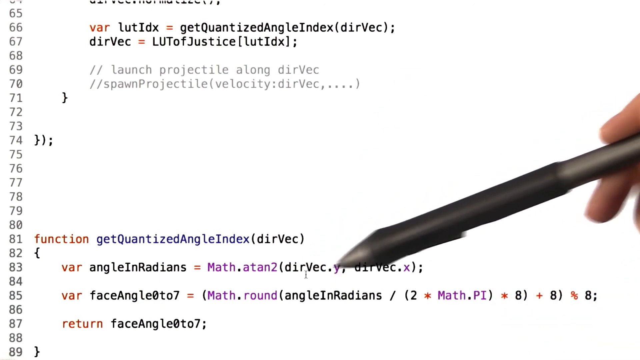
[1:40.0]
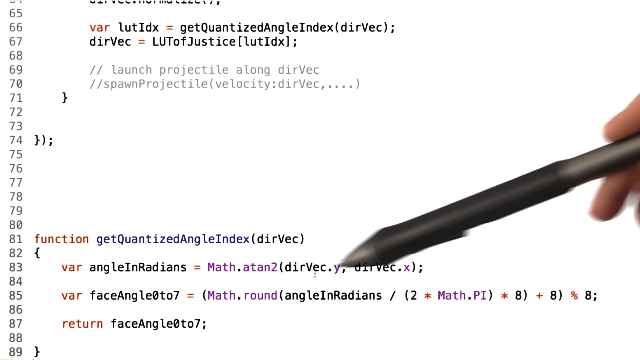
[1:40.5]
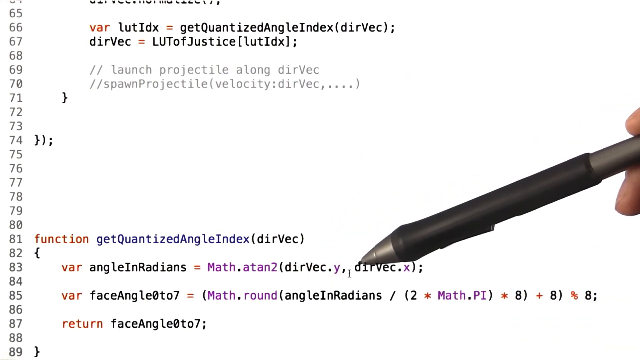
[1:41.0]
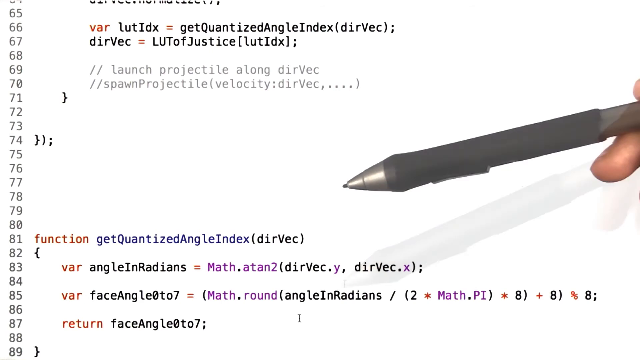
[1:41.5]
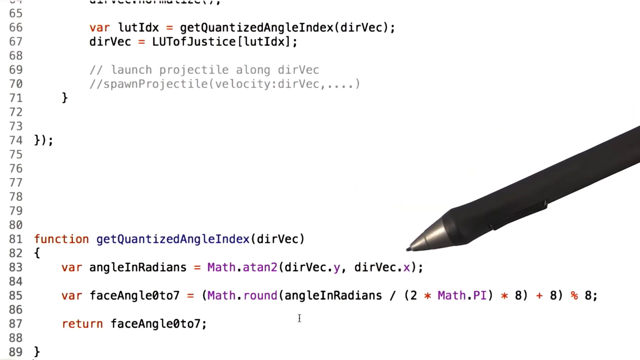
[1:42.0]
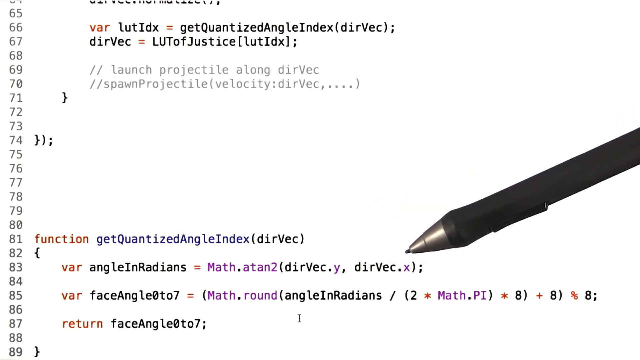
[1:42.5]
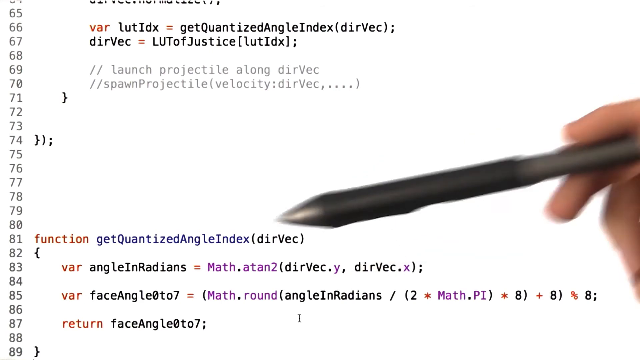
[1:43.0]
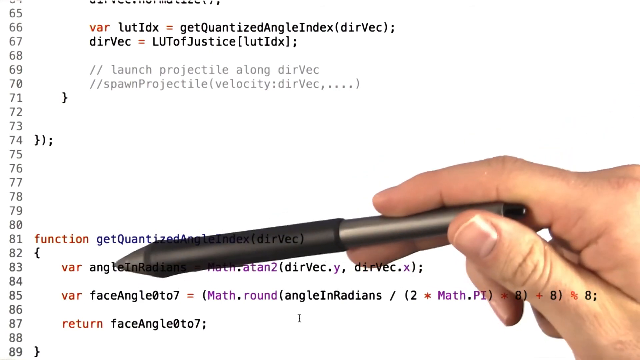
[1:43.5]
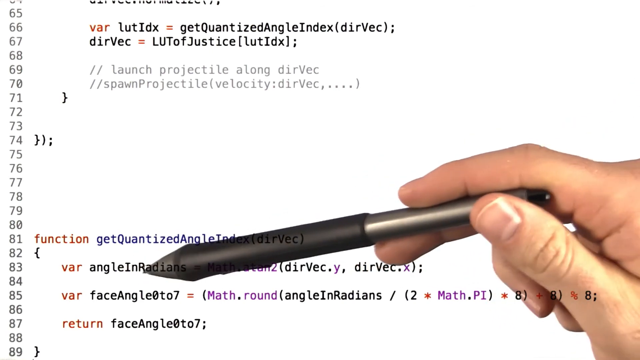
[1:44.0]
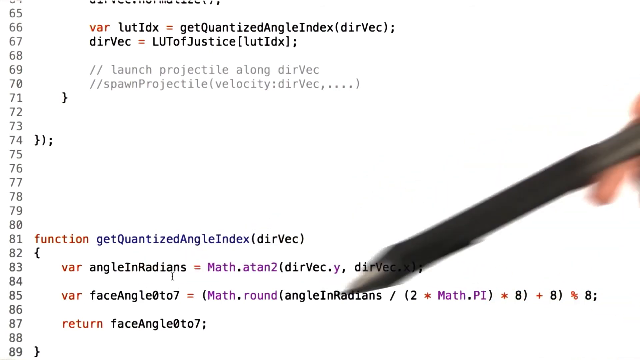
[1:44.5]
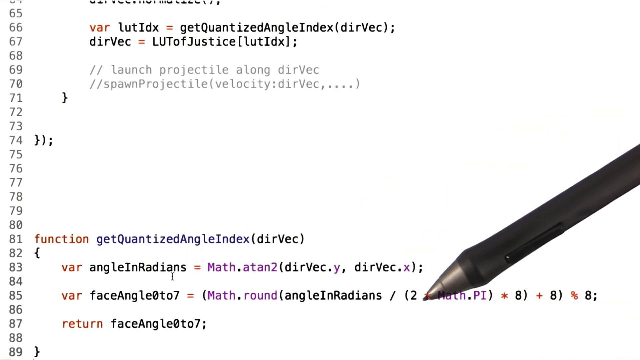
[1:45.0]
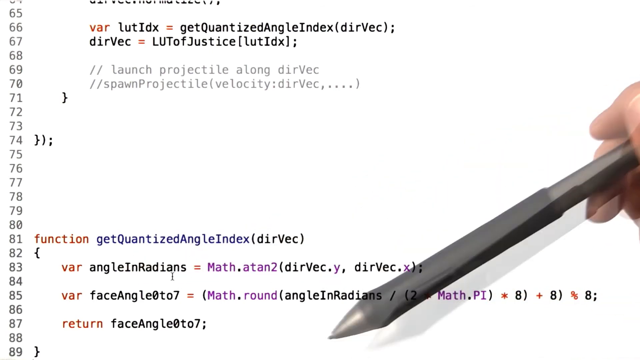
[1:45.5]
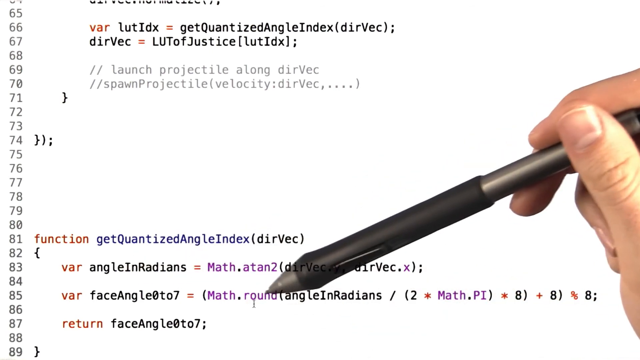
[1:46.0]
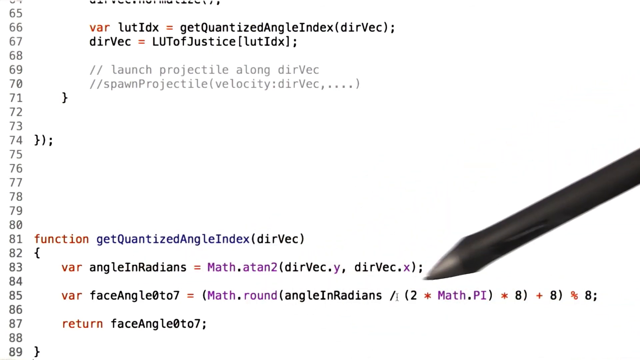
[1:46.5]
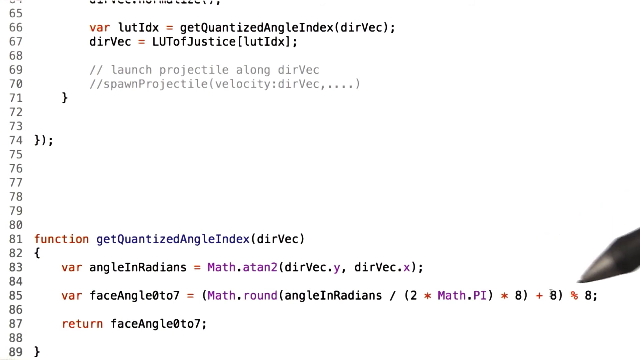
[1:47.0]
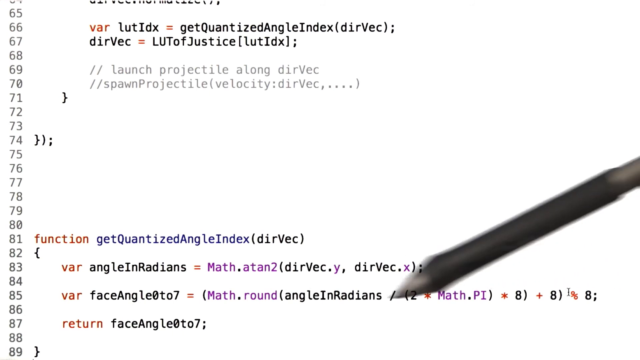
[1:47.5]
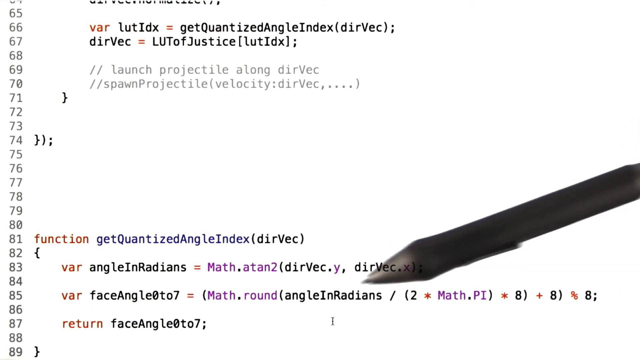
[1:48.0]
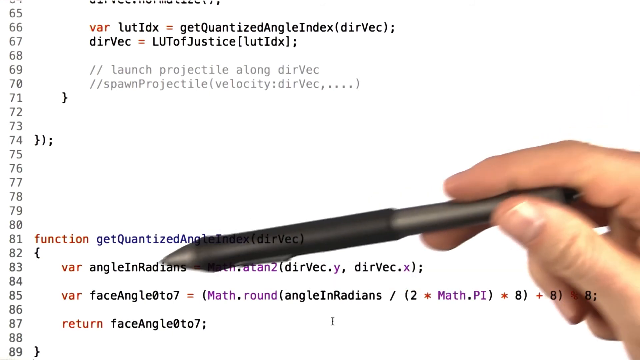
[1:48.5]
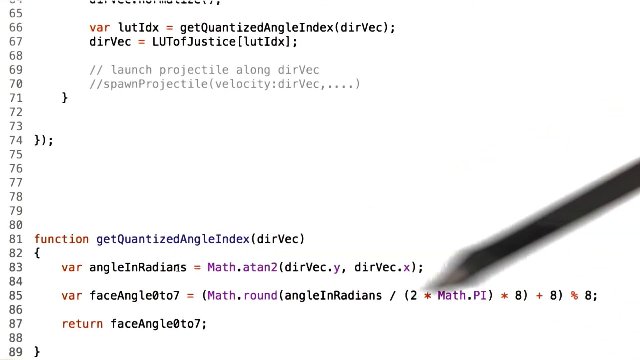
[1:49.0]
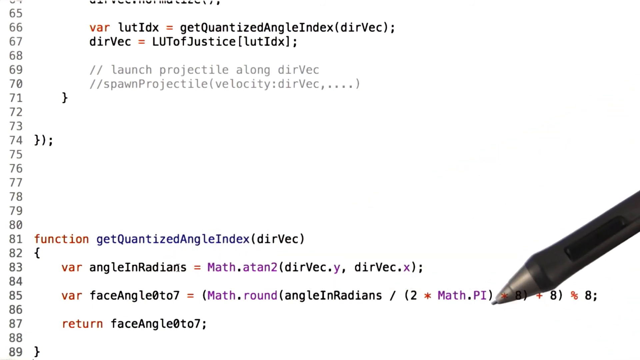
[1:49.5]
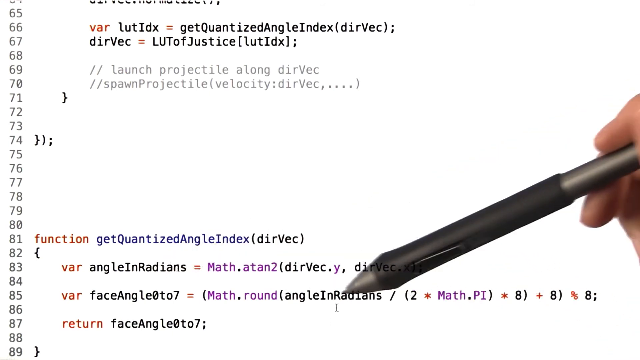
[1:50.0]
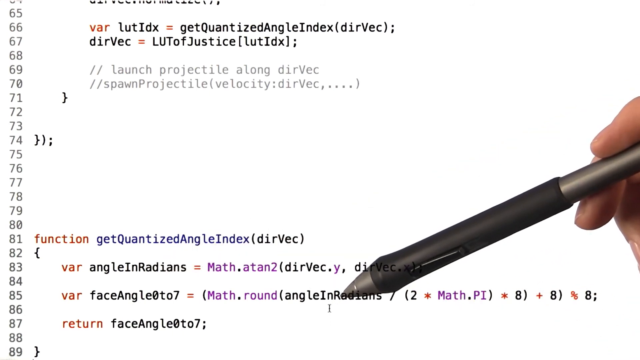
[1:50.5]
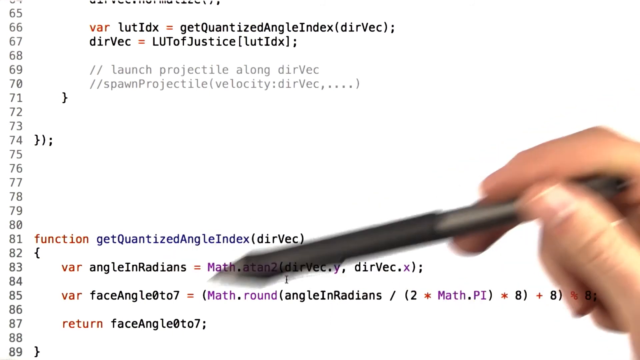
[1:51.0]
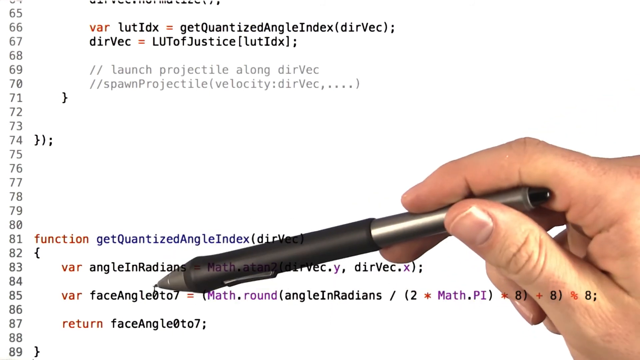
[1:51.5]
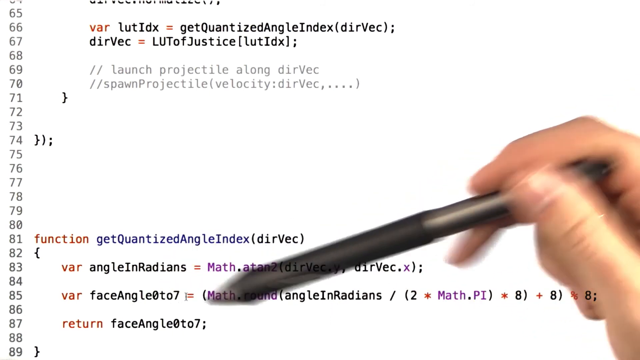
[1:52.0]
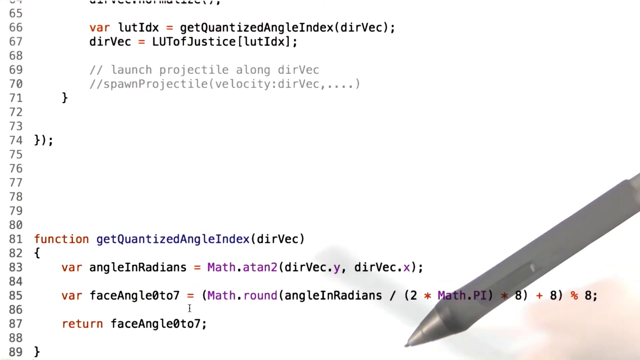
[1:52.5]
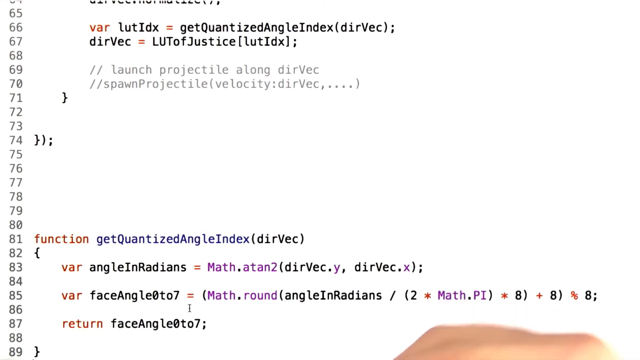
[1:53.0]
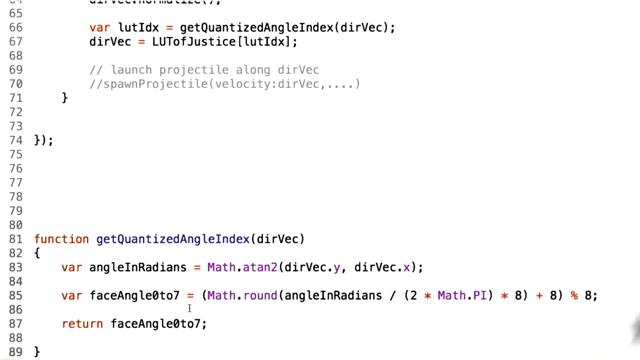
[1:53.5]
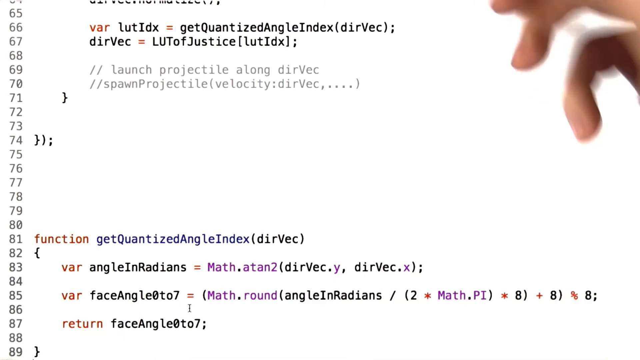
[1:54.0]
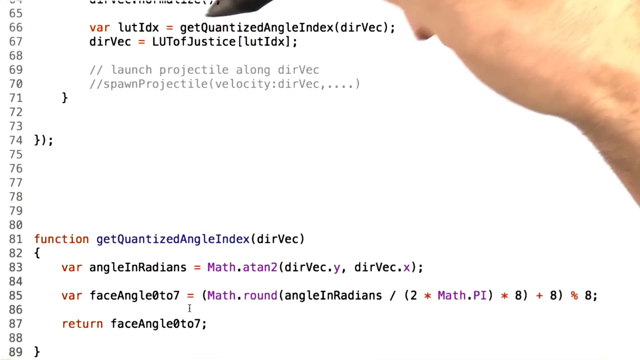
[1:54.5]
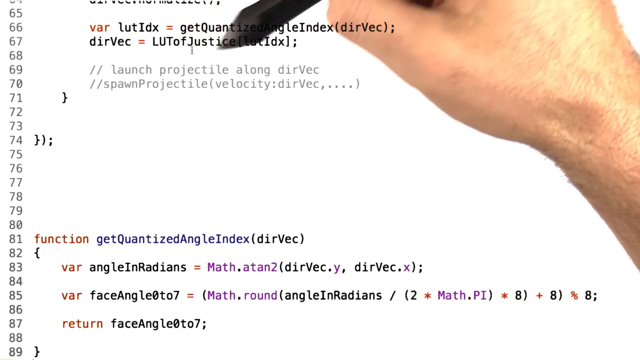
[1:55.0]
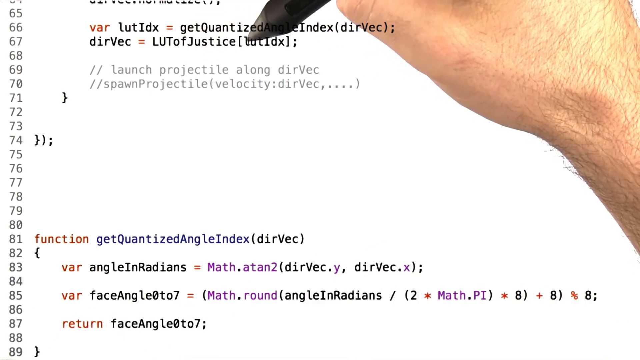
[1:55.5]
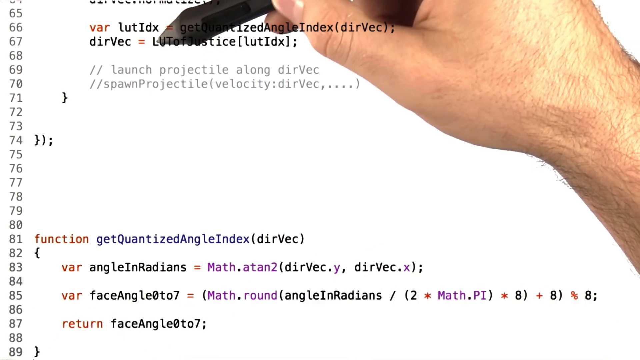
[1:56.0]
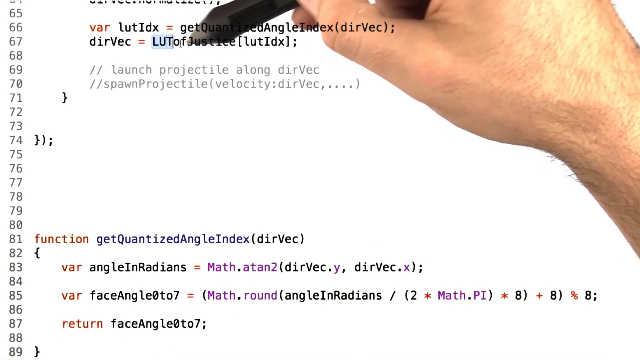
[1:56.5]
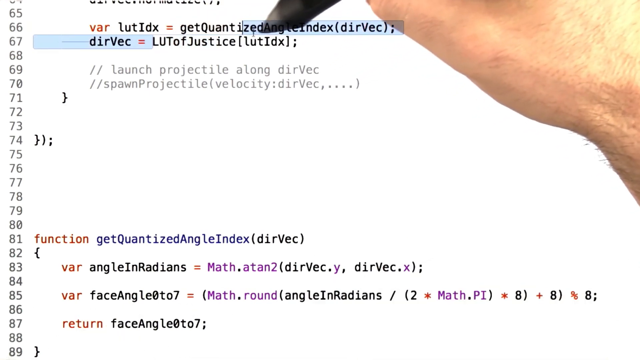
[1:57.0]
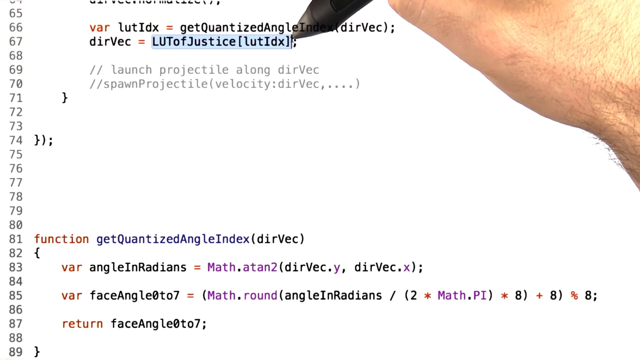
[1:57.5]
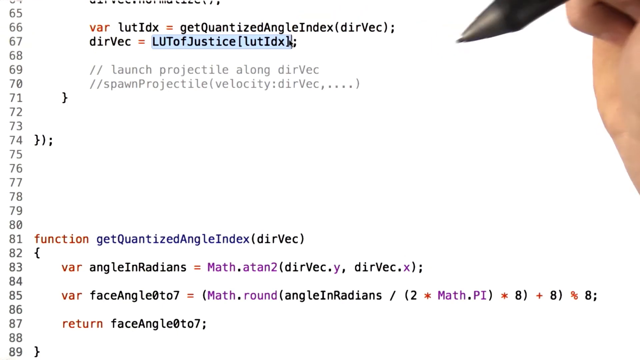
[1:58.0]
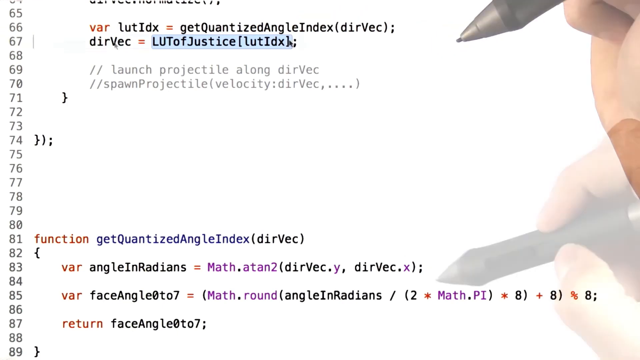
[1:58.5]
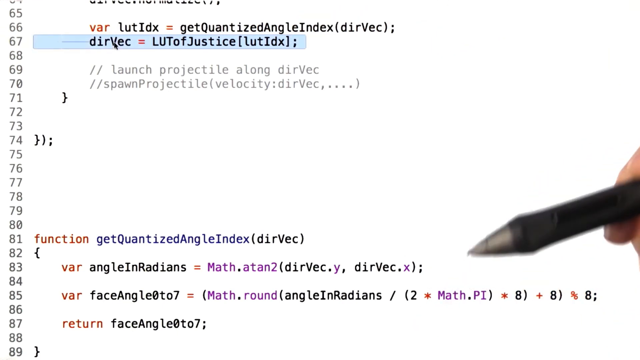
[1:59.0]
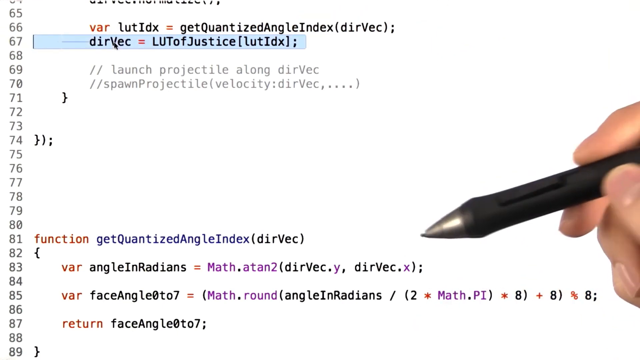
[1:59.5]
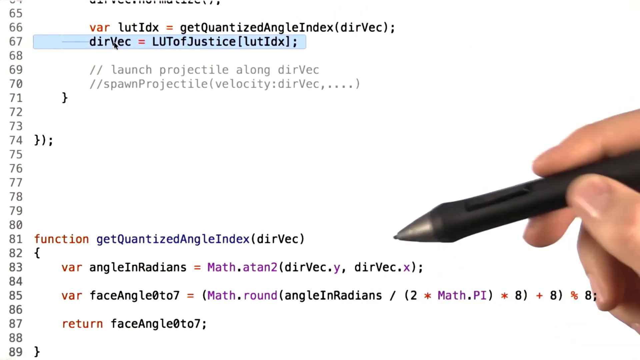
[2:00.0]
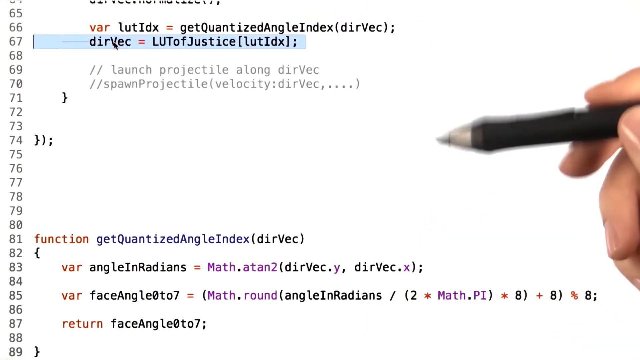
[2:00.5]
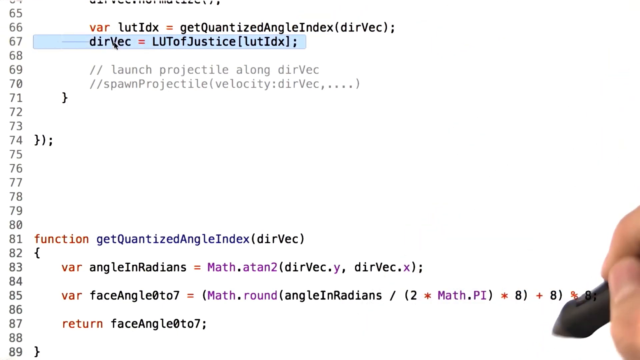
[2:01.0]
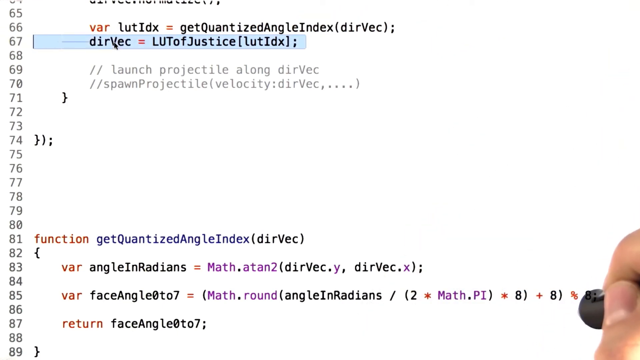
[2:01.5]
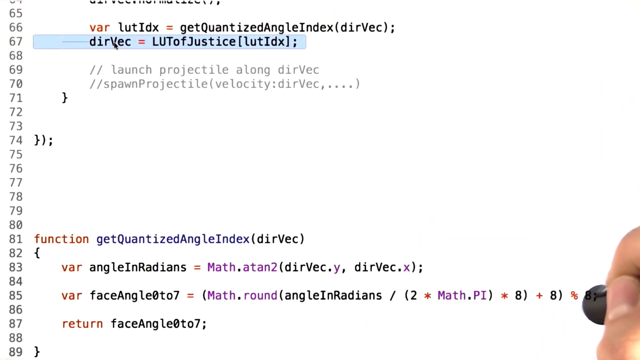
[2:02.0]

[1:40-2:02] A light-skinned Caucasian hand holds a mechanical pencil or stylus, which is black and has two separate sections. Lines of code 65 through 88 are in focus, and the pencil points at different areas, highlighting certain parts while moving from left to right. Lines 69 and 70 have a description of the sections of code, relating to projectiles and launching projectiles. At one point, the hand moves the stylus alongside line 67, and the dirvec variable becomes highlighted in blue covering the entire text. Lines 83 through 87 seem to focus on calculating angles and radians, using multiple math functions.